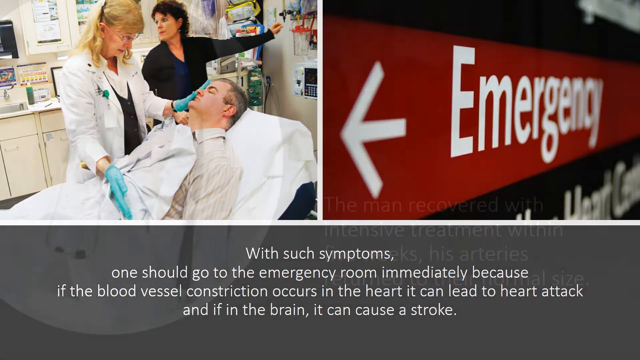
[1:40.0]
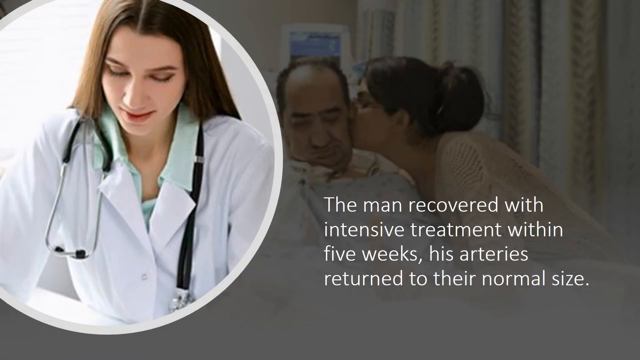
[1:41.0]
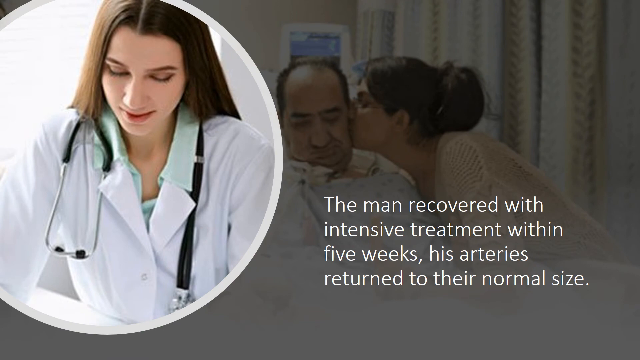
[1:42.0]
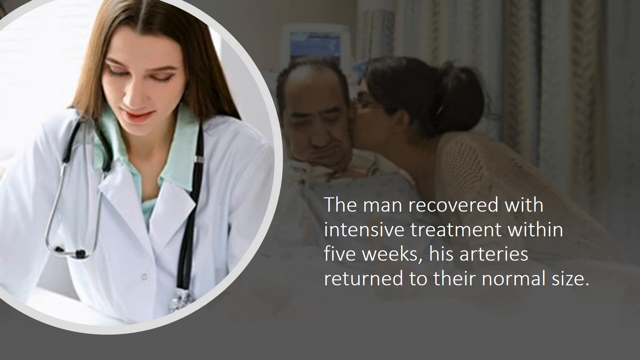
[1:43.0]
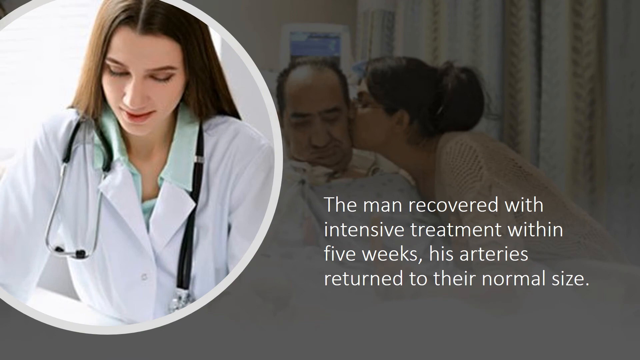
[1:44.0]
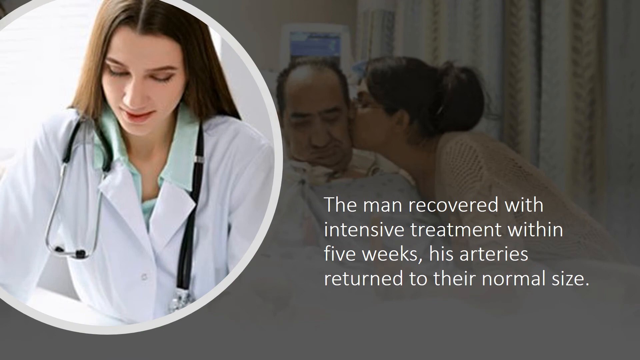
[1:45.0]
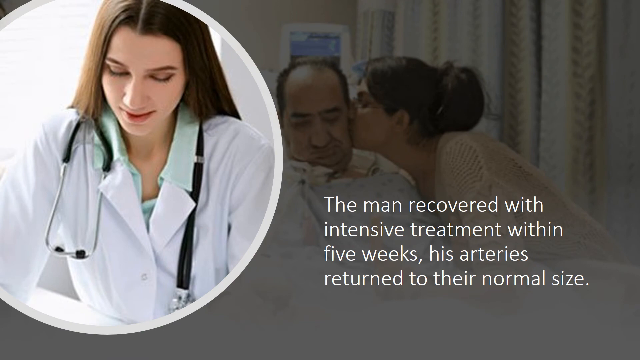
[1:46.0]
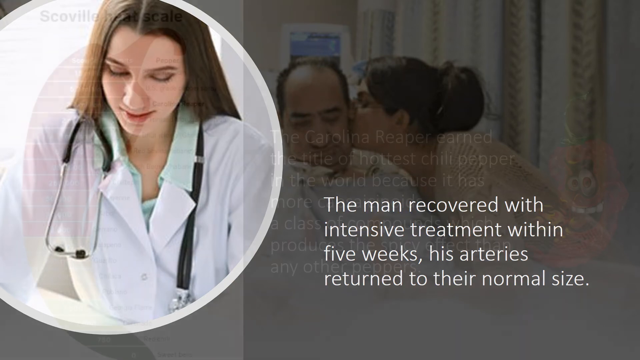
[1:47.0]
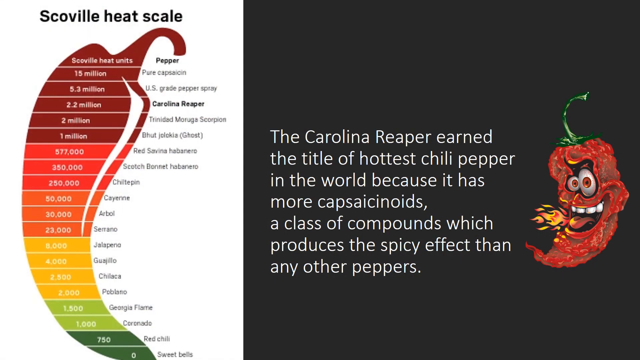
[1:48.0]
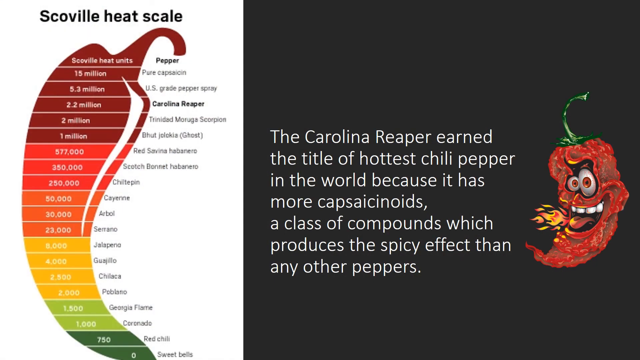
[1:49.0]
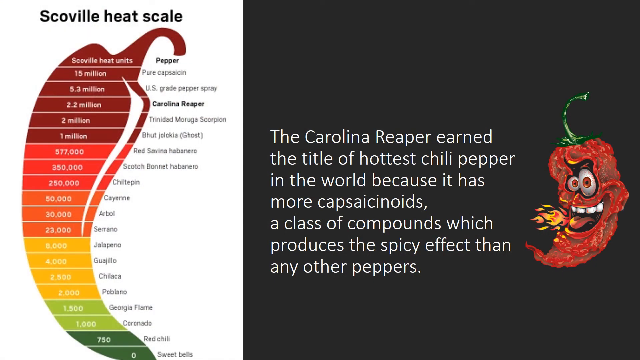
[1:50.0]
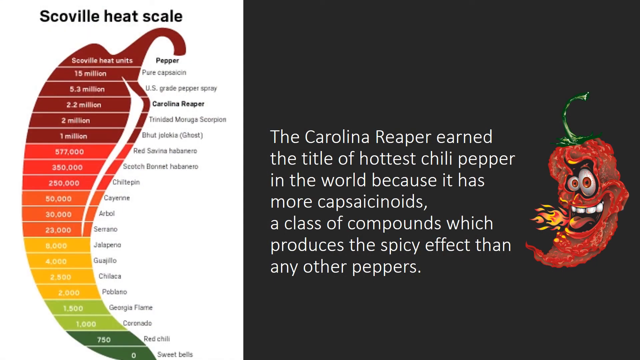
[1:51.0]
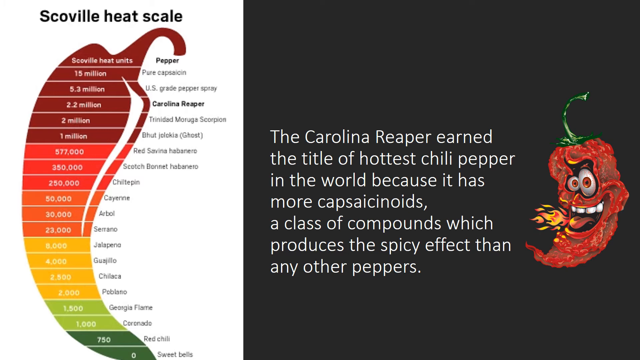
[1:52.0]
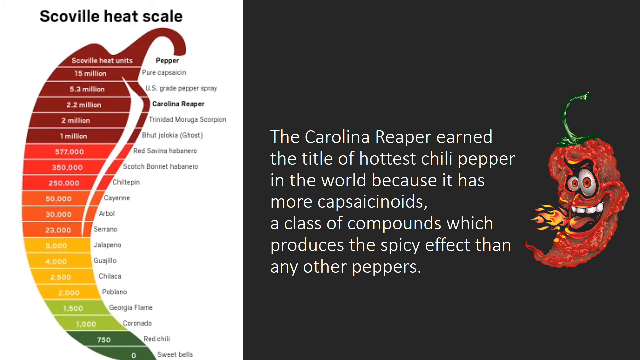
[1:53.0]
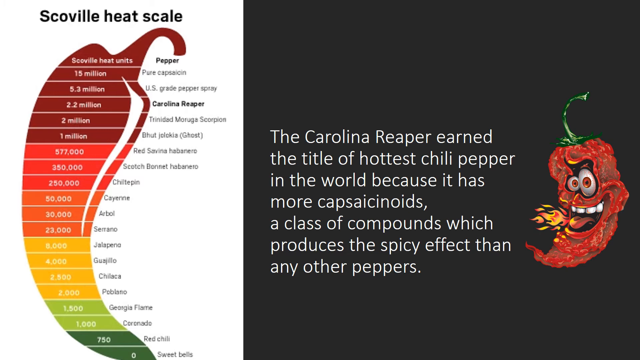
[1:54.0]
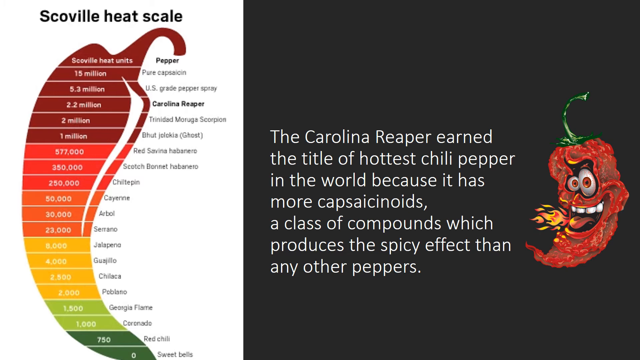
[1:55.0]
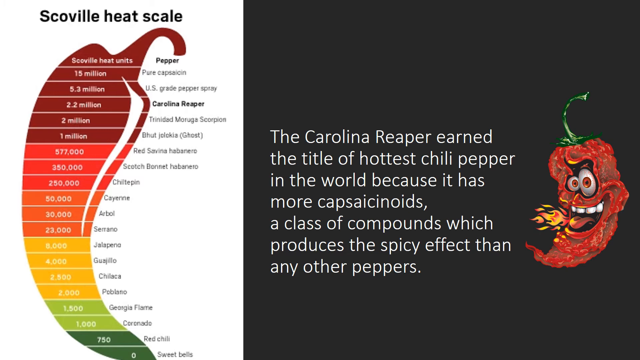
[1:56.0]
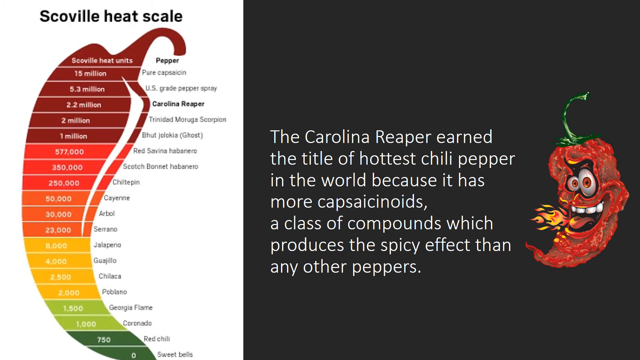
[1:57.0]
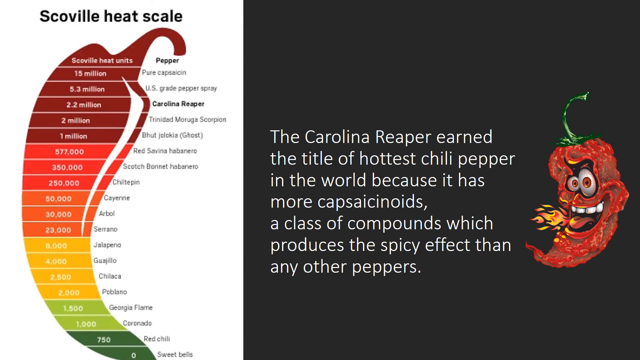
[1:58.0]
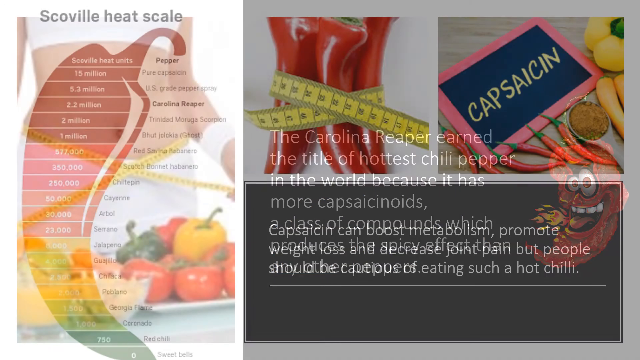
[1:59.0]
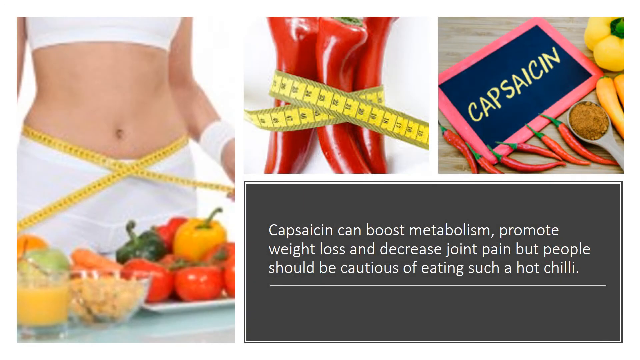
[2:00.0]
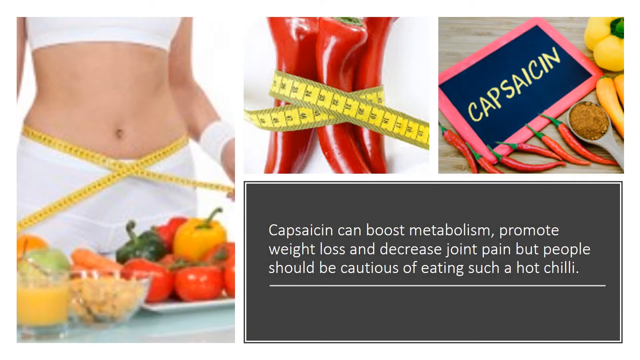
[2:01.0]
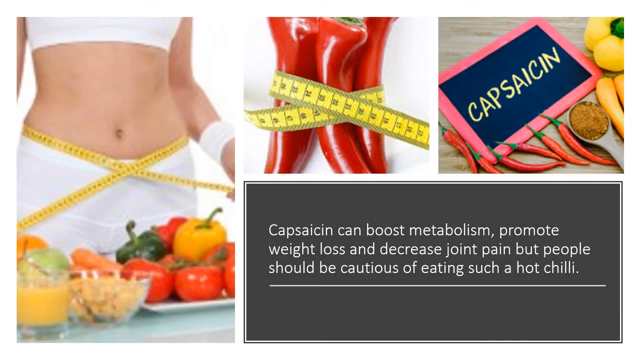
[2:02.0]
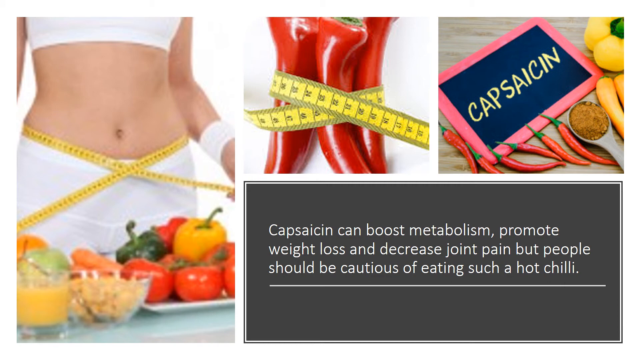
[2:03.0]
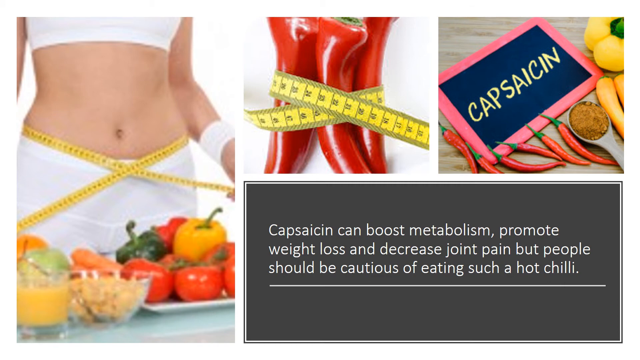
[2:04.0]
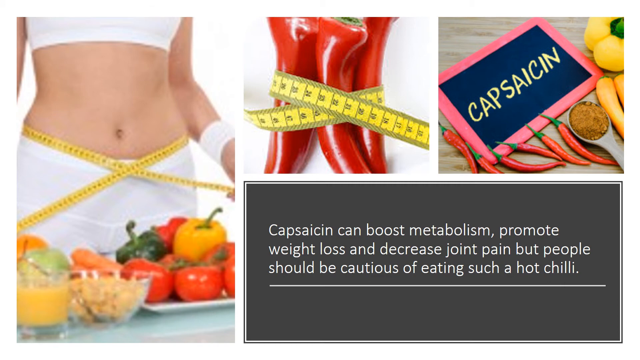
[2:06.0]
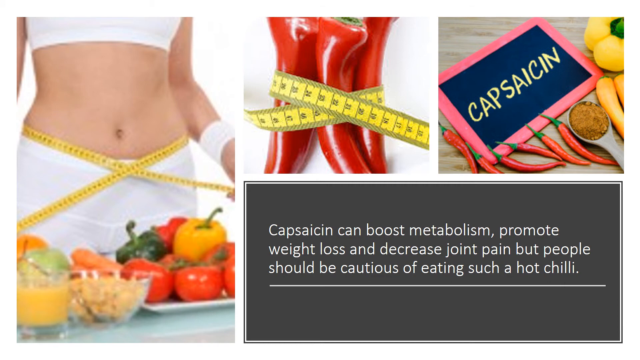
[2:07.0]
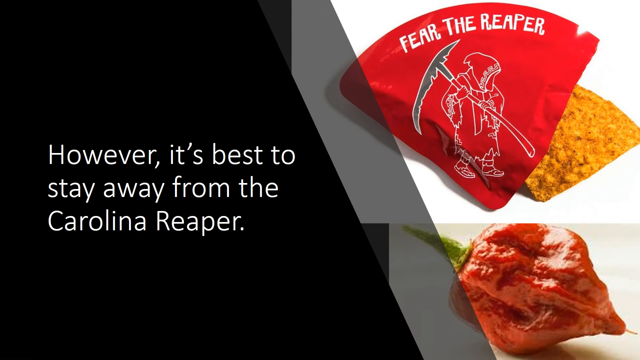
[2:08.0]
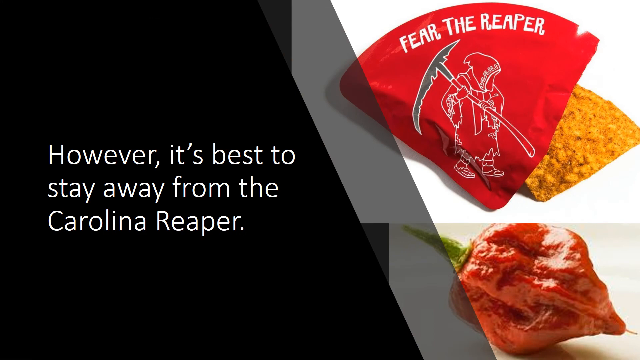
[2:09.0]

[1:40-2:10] The slide of the two female medical professionals with the man lying on a stretcher in the exam room is on screen, then quickly transitions to an image of a female doctor in a lab coat on the left and an opaque image of an Indian woman kissing an older Indian man on the cheek as he lies in a hospital bed. Text reads "the man recovered with intensive treatment within five weeks. His arteries returned to their normal size." Next, a Scoville heat scale appears on the left against a white background, kind of an infographic showing mild peppers all the way up to the hottest known peppers and their Scoville units. On the right, text reads: "the Carolina Reaper earned the title of the hottest chili pepper in the world because it has more capsaicinoids, a class of compound which produces the spicy effect than any other peppers."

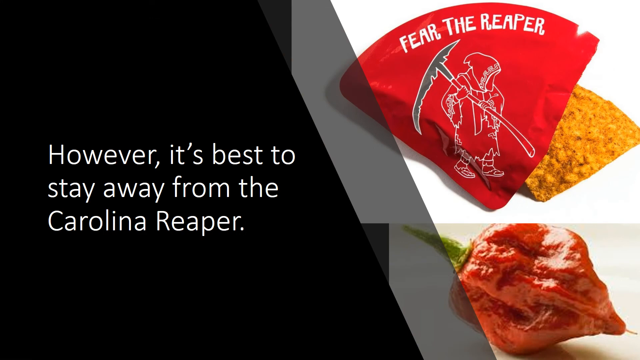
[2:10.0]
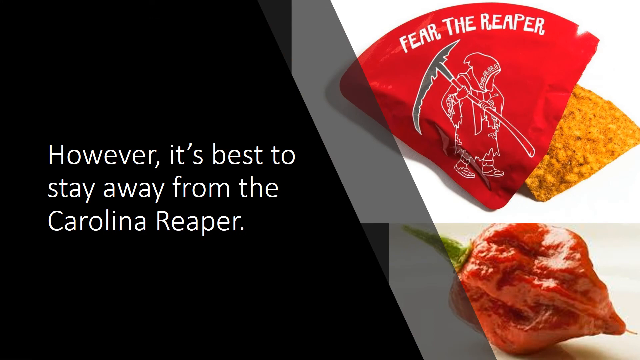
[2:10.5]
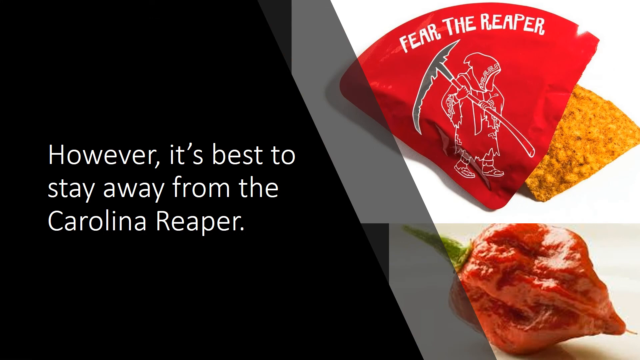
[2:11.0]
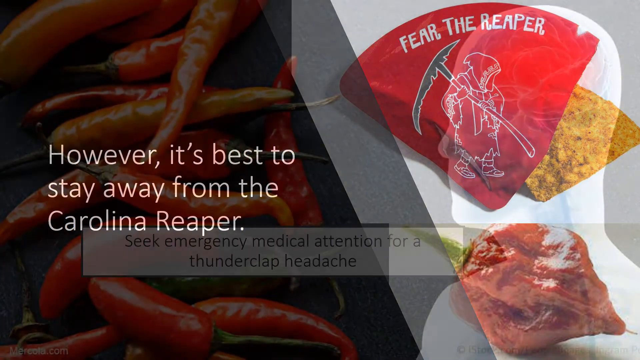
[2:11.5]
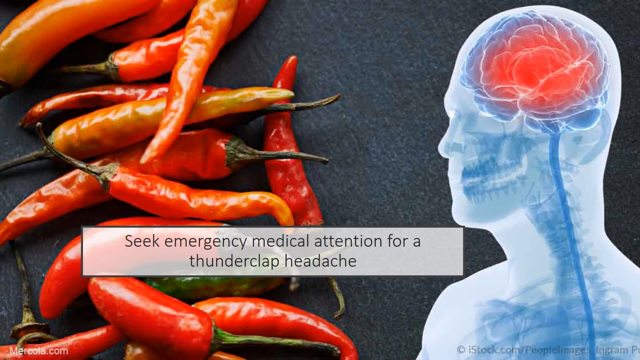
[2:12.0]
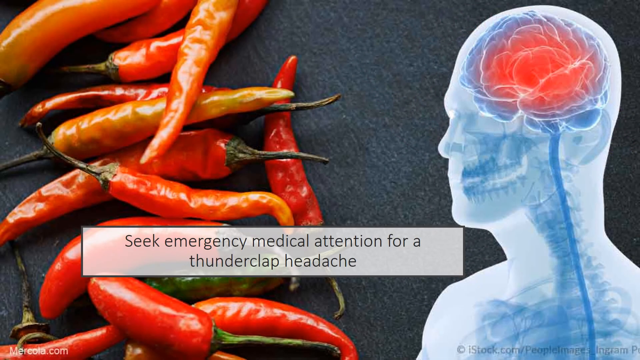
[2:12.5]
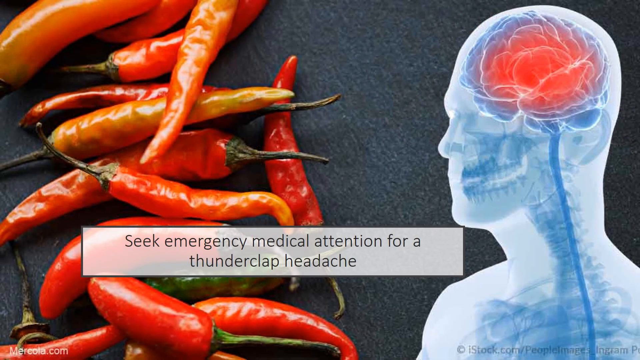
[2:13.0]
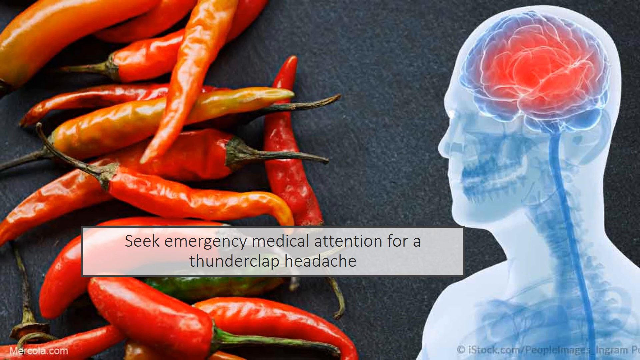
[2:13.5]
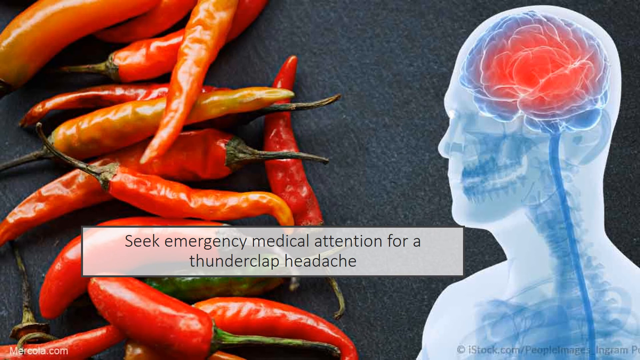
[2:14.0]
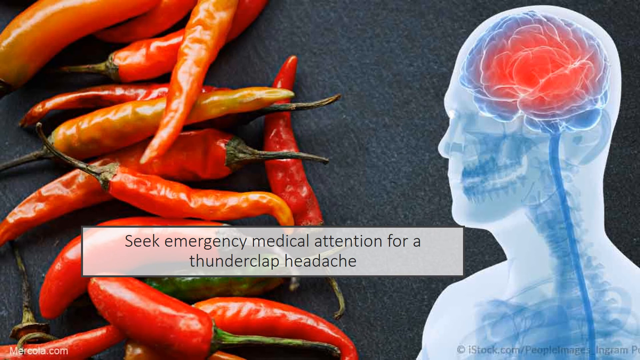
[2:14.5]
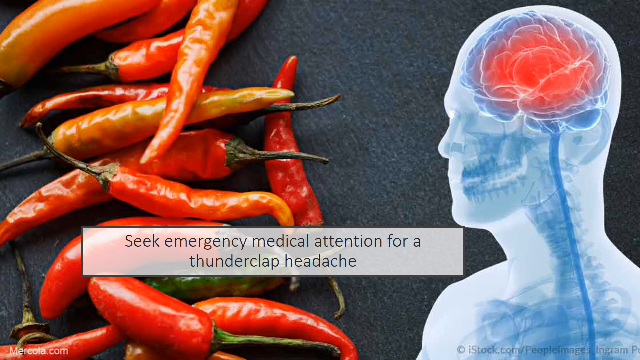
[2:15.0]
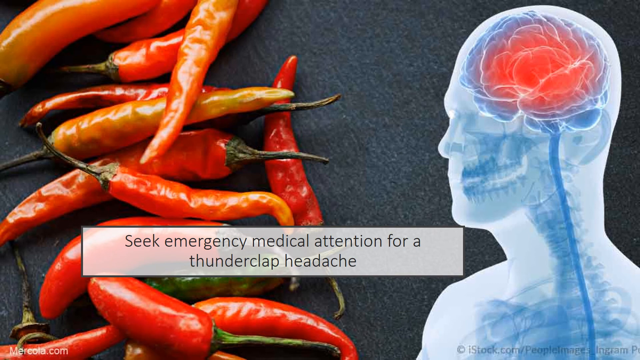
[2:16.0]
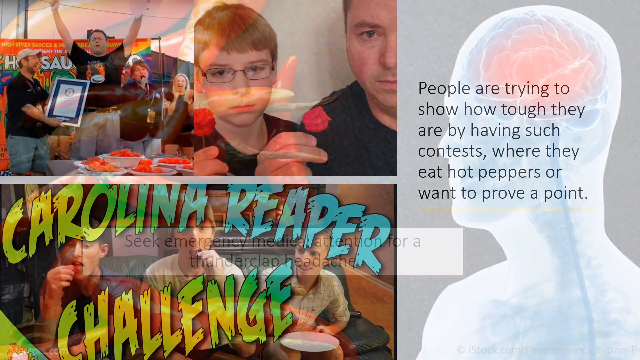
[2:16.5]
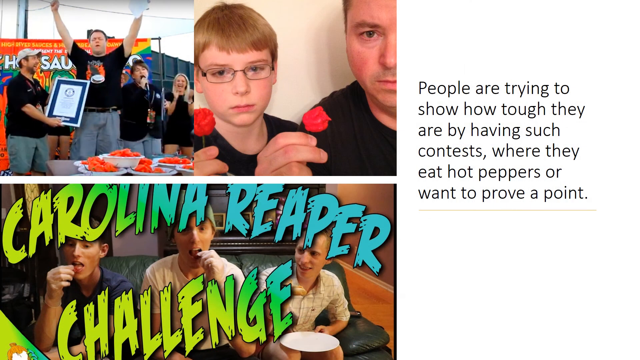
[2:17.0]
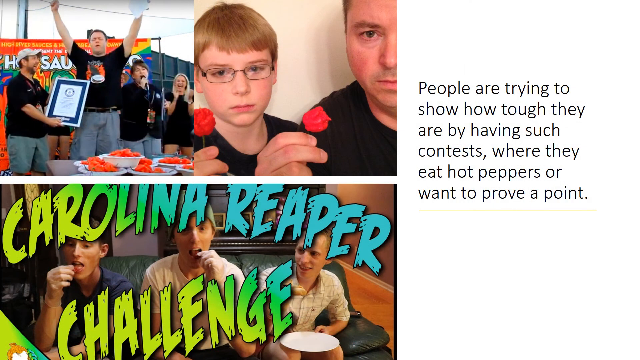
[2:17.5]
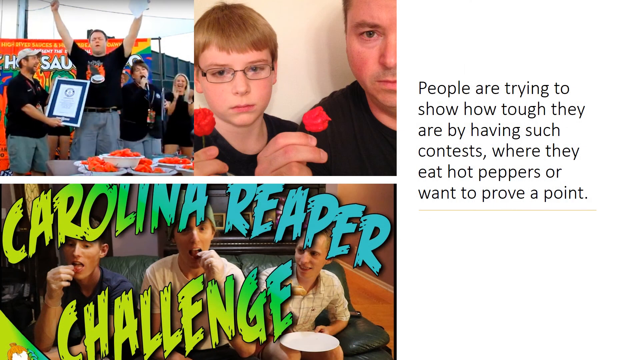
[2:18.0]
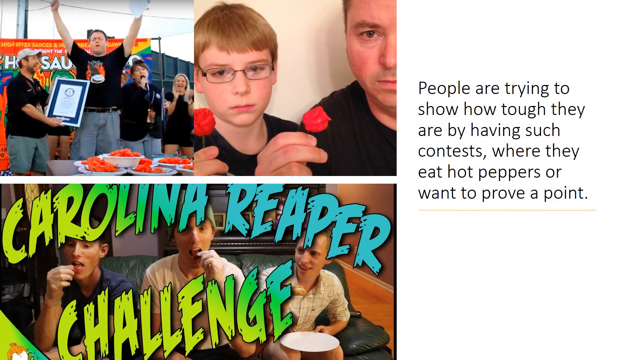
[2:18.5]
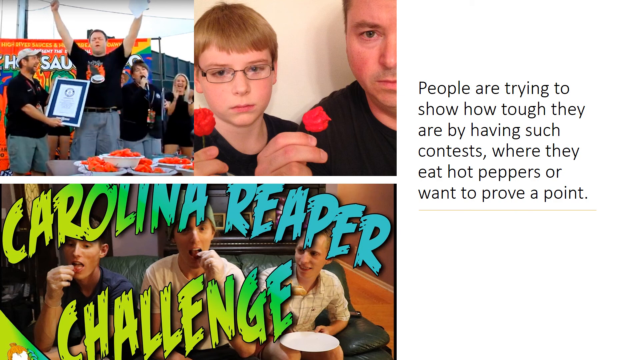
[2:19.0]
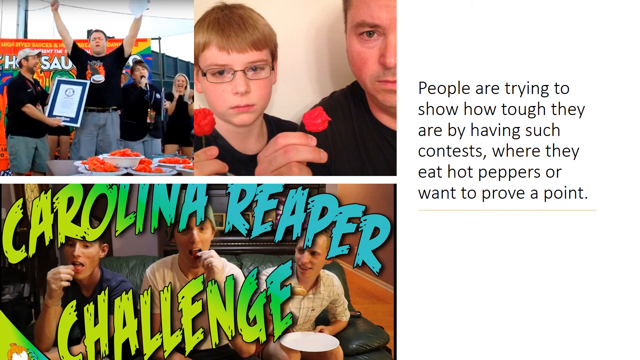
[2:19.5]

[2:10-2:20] A slide shows white text reading "however, it's best to stay away from the Carolina Reaper." It switches to a slide showing red chili peppers on a dark, flat table surface, with text reading "seek emergency medical attention for a thunderclap headache." A translucent image shows a red or inflamed brain. Another image shows people holding chili peppers in their hands, with text reading "people are trying to show how tough they are by having such contests where they eat hot peppers or want to prove a point." One of the images is labeled "the Carolina Reaper challenge."